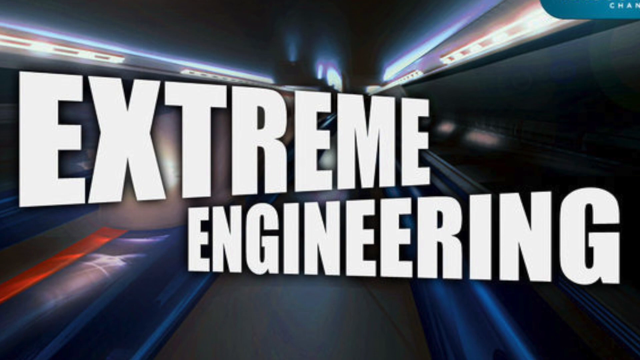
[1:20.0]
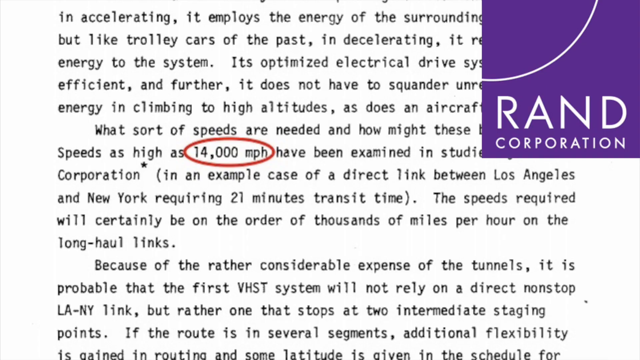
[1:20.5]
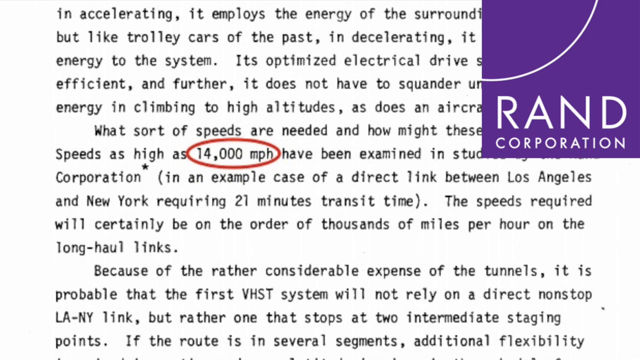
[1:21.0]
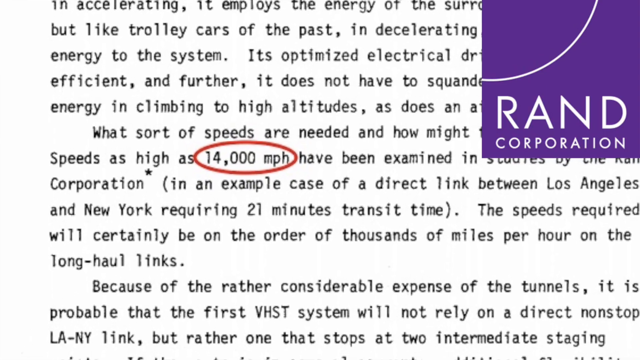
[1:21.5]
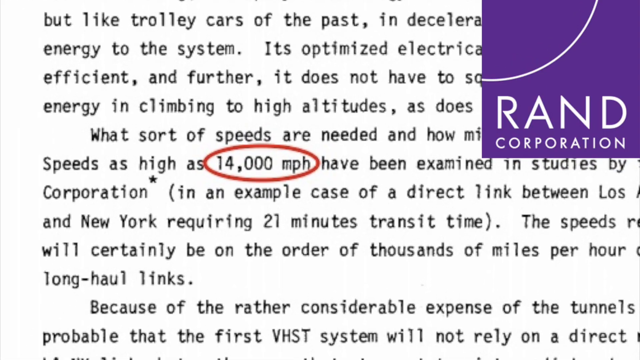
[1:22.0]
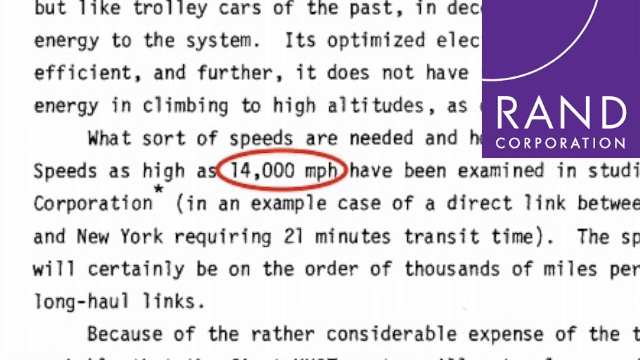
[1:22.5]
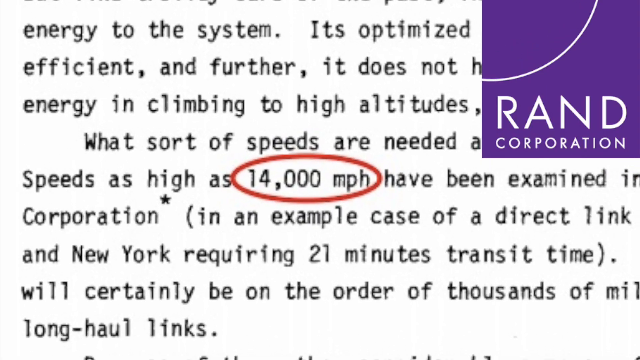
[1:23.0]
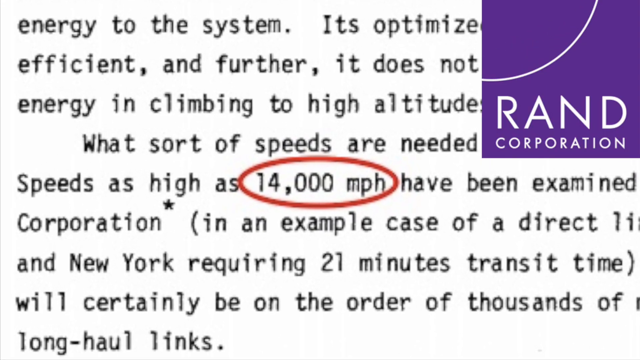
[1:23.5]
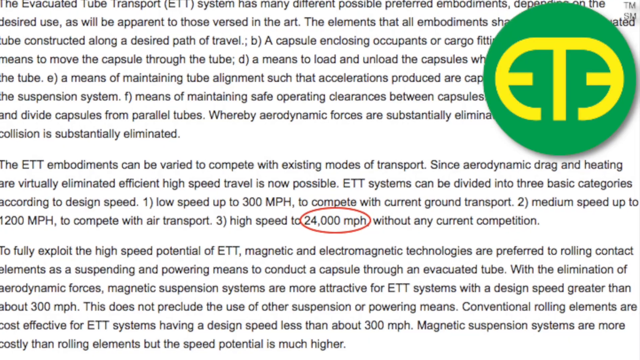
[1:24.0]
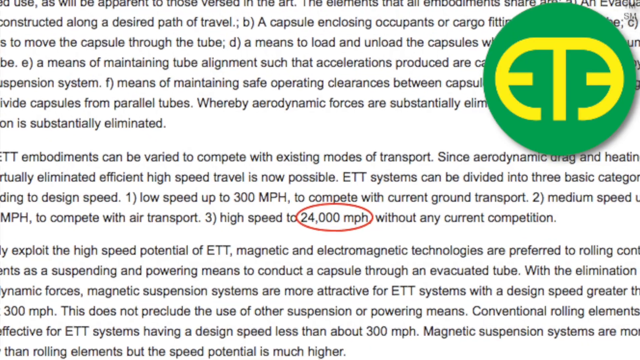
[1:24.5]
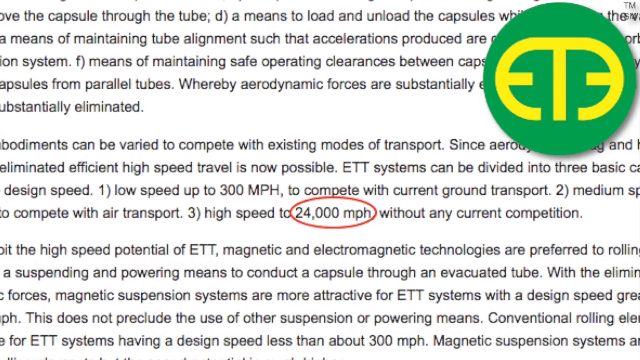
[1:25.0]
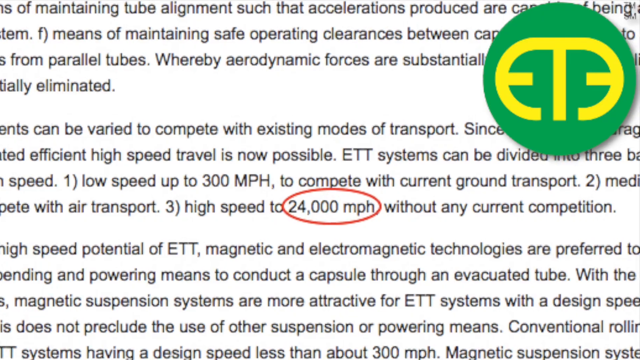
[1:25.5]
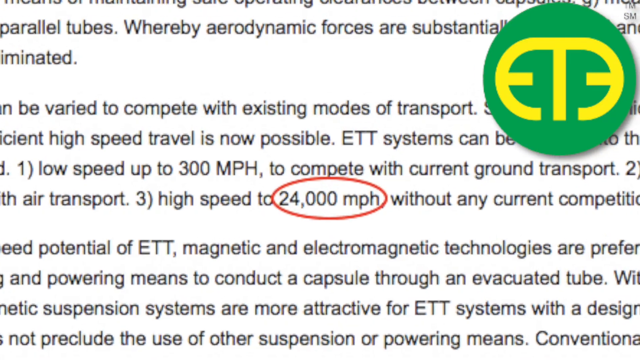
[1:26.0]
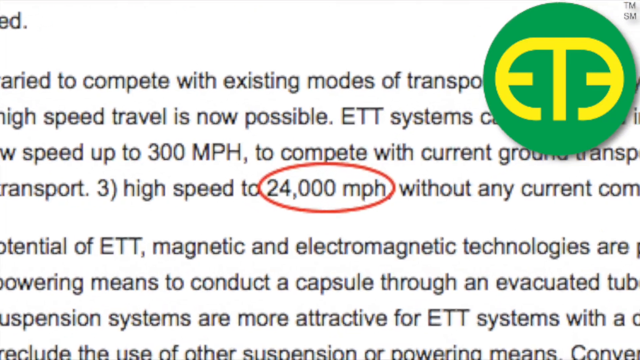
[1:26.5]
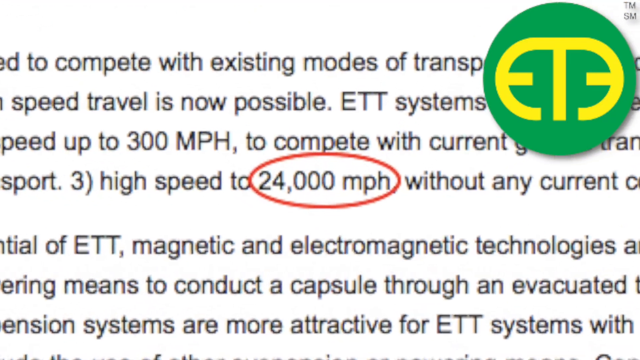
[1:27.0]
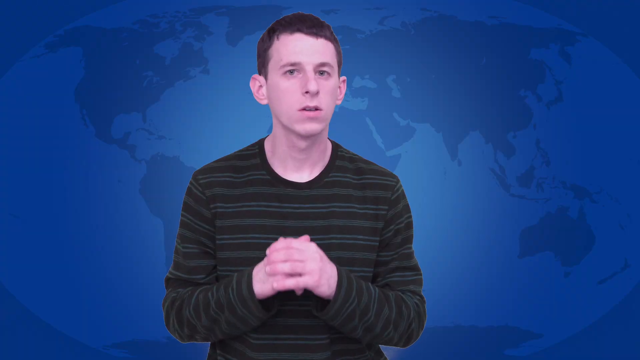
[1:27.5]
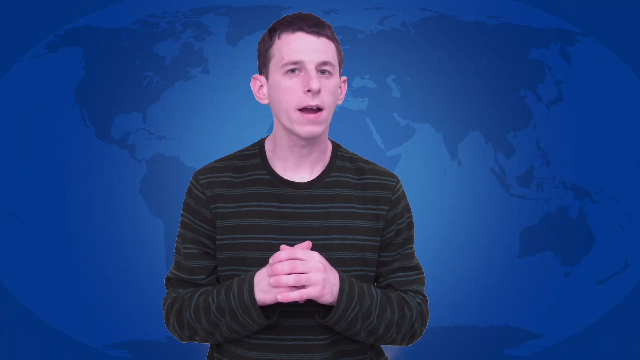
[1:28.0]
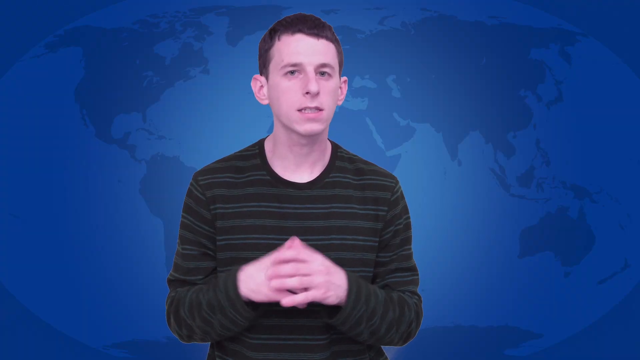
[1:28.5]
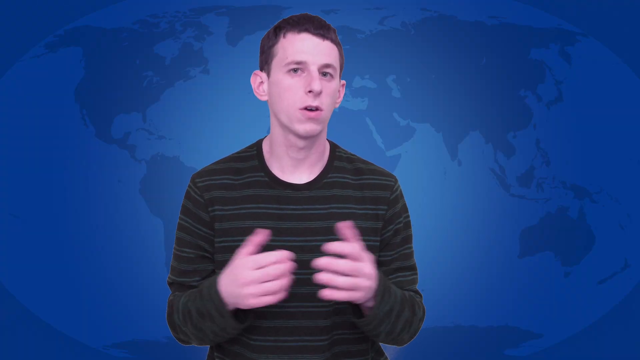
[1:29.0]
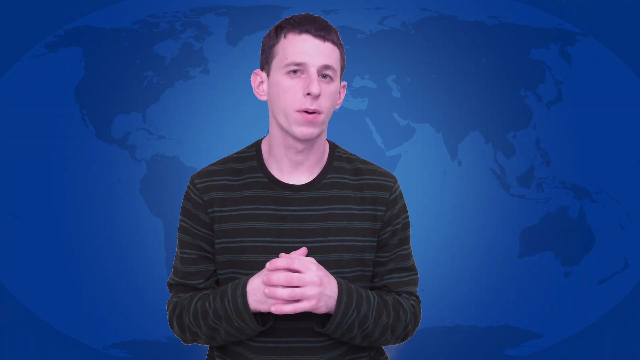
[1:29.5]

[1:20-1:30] A screen full of words shows the RAND Corporation in purple in the upper right-hand corner, with text about trolley cars and efficiency and the question of what speeds are needed. It states that 14,000 miles per hour has been examined in studies by this corporation, thousands of miles per hour with a long-haul link, and an LA to New York link of about 21 minutes. Next comes an evacuated tube transport (ETT) system, with 24,000 miles per hour circled, medium speed up to 1,200 miles per hour, and magnetic and electromagnetic technology. The video then returns to the young man.